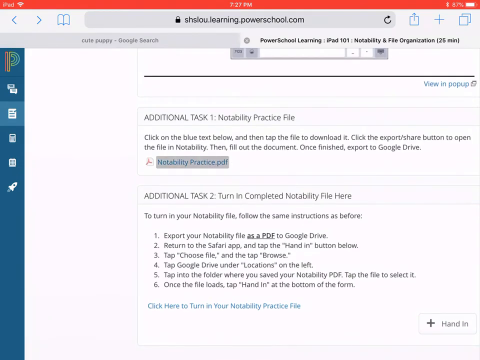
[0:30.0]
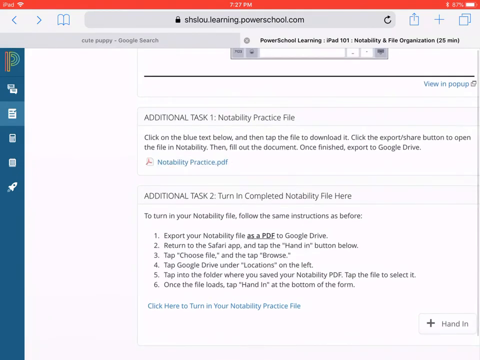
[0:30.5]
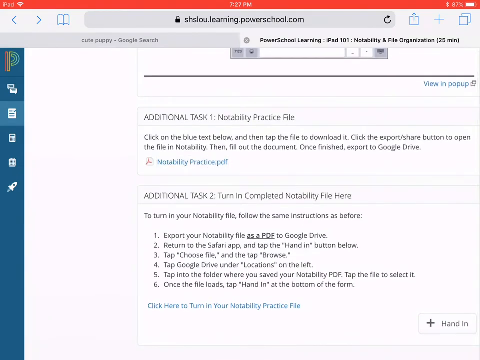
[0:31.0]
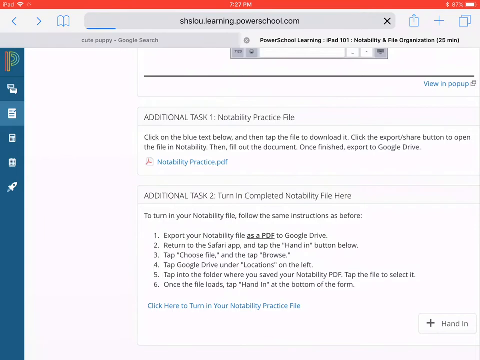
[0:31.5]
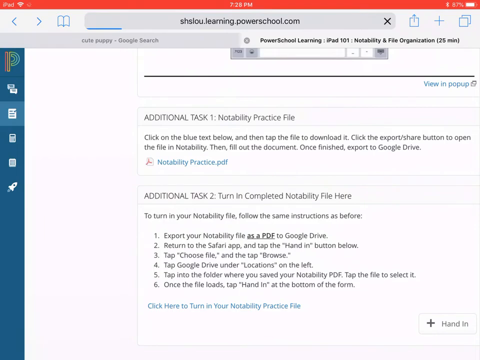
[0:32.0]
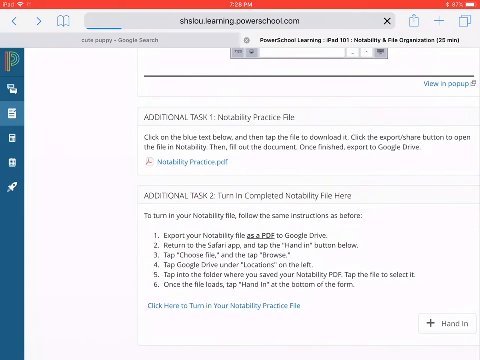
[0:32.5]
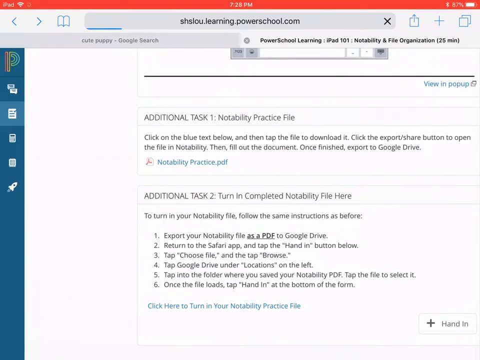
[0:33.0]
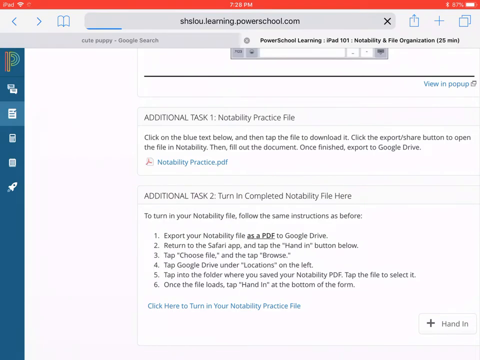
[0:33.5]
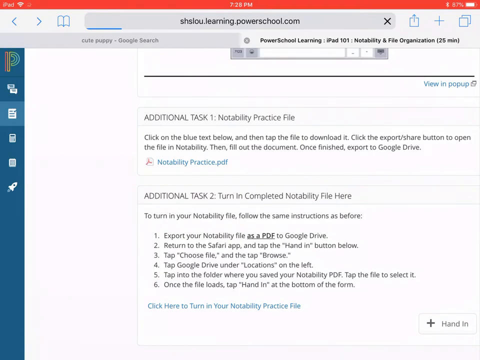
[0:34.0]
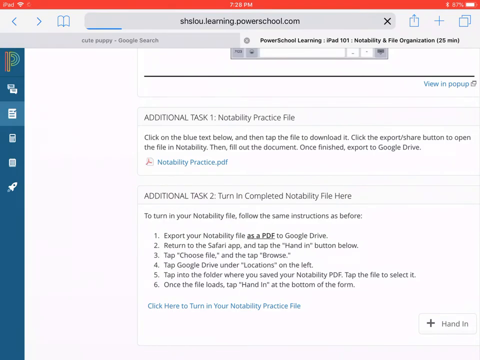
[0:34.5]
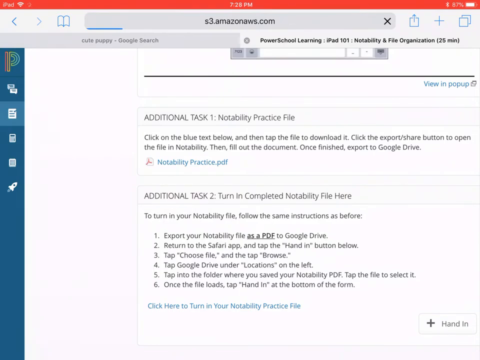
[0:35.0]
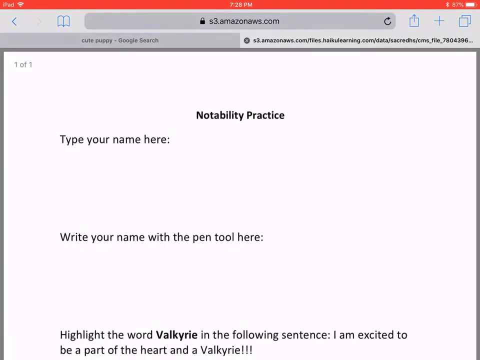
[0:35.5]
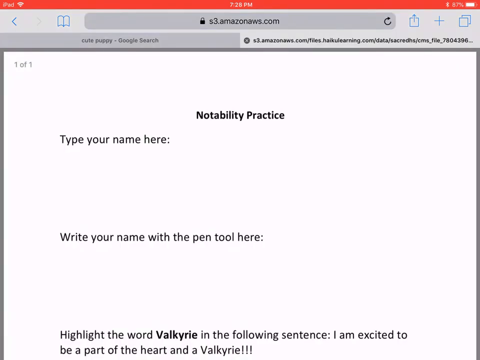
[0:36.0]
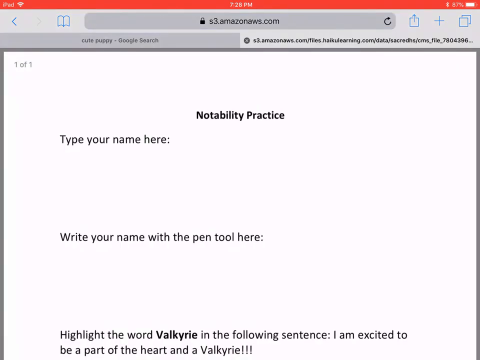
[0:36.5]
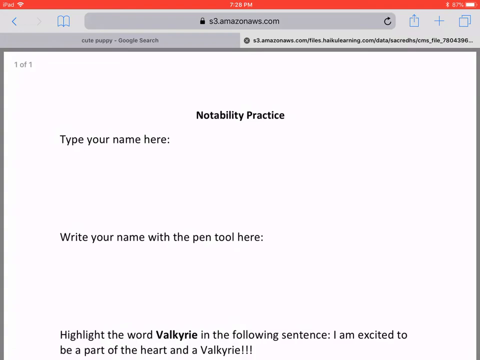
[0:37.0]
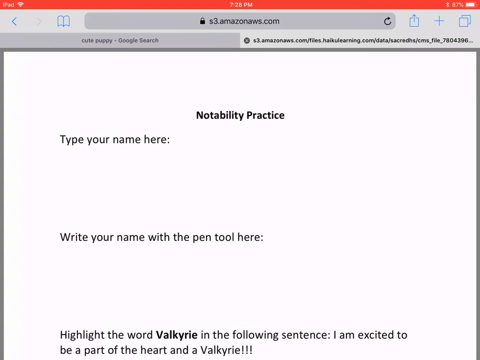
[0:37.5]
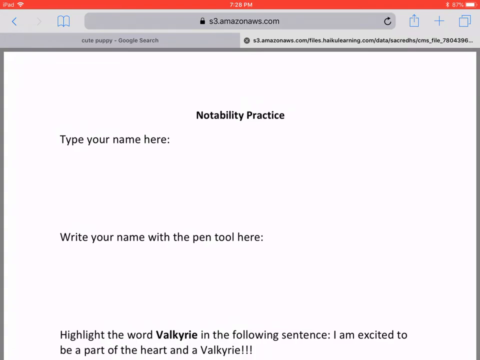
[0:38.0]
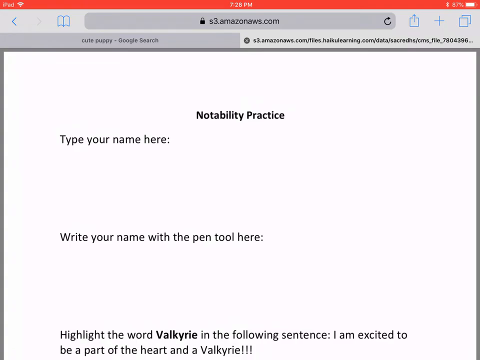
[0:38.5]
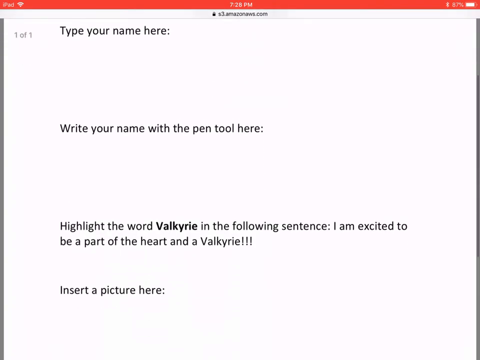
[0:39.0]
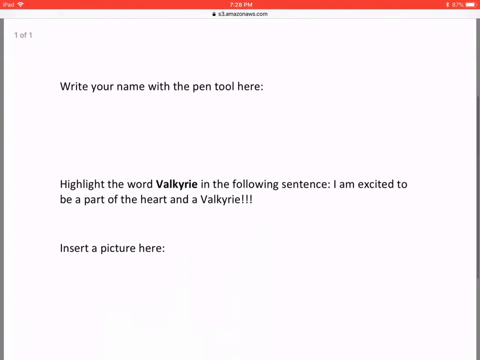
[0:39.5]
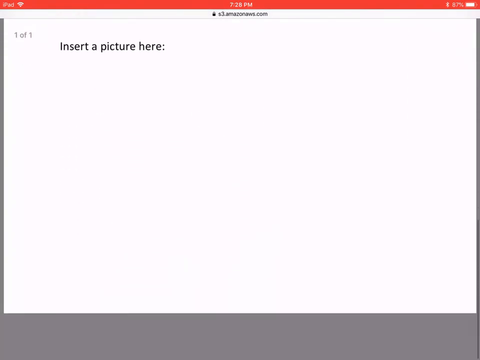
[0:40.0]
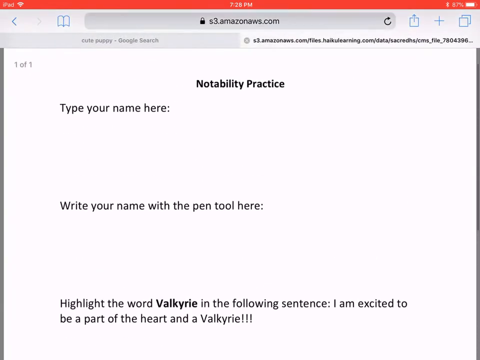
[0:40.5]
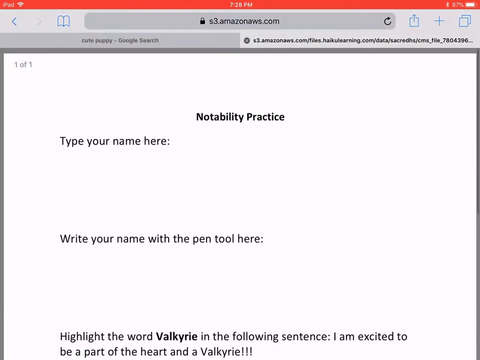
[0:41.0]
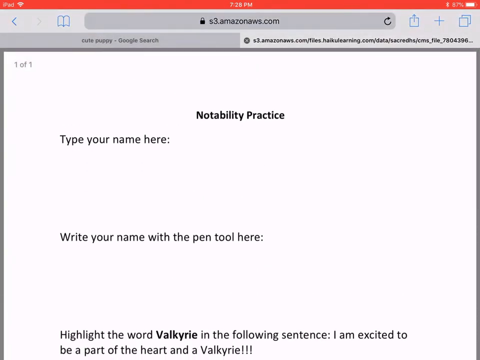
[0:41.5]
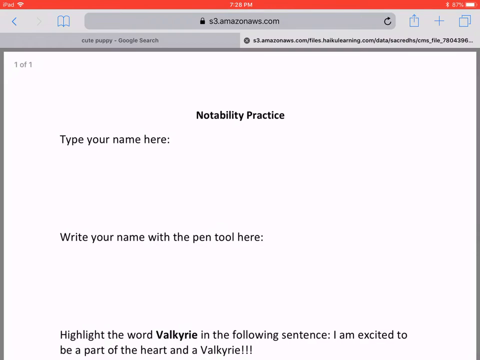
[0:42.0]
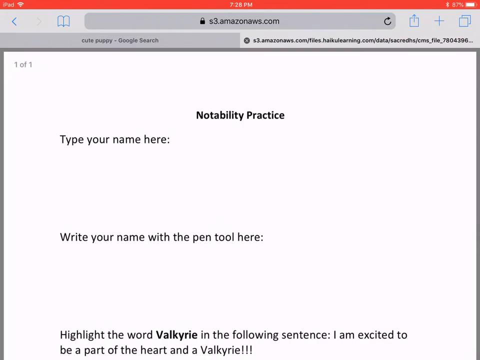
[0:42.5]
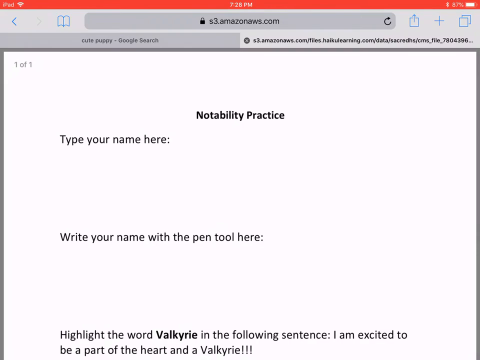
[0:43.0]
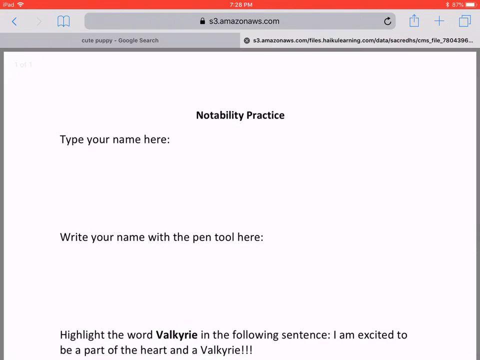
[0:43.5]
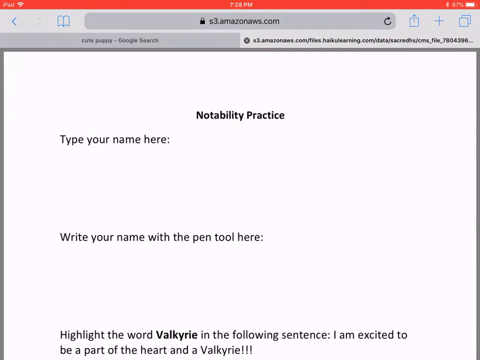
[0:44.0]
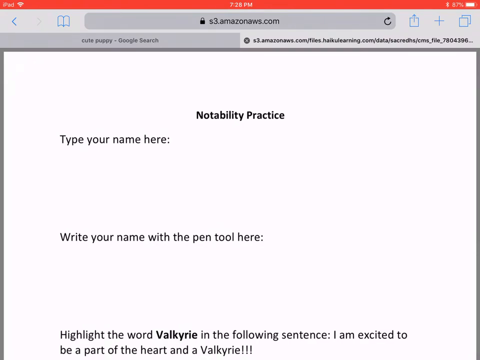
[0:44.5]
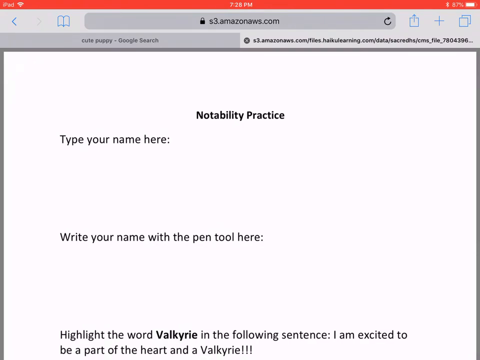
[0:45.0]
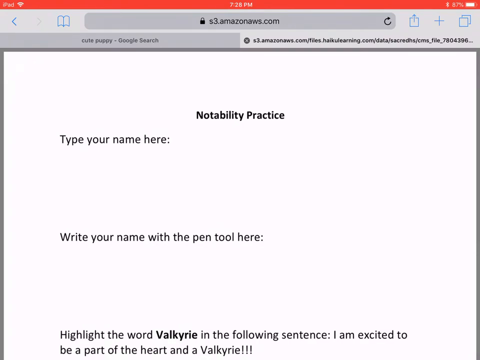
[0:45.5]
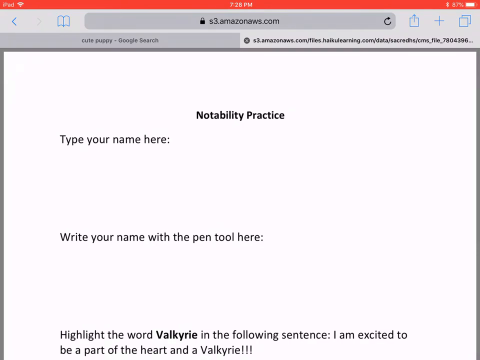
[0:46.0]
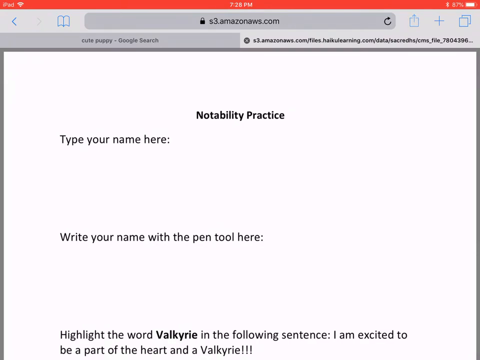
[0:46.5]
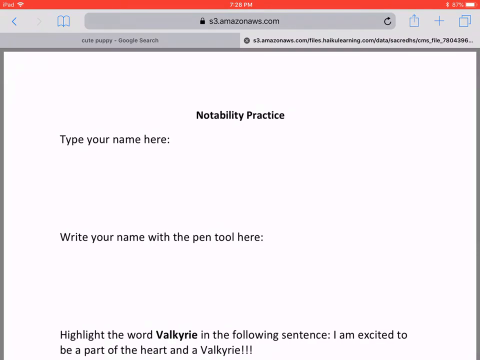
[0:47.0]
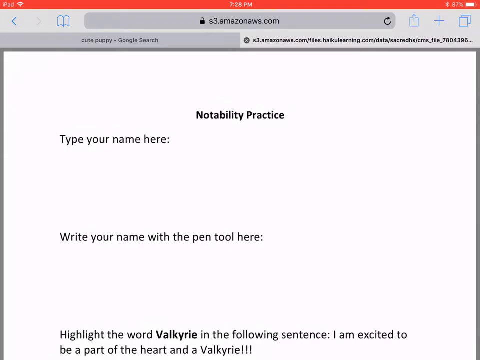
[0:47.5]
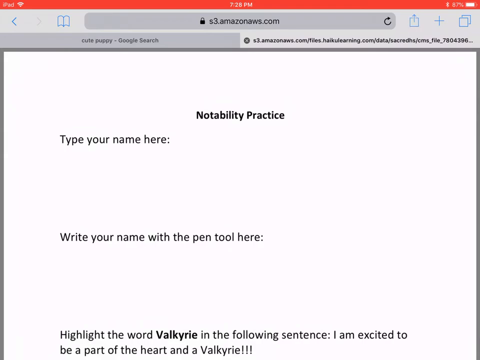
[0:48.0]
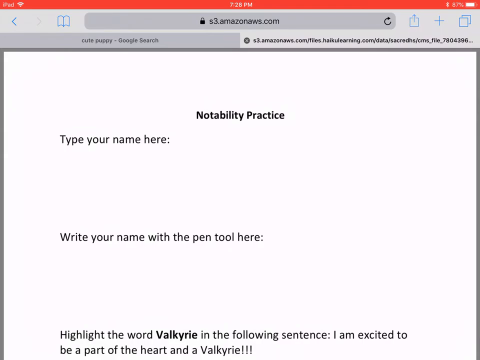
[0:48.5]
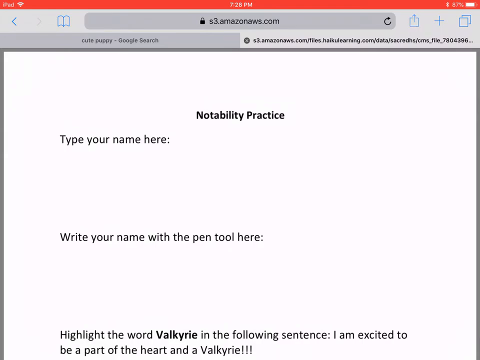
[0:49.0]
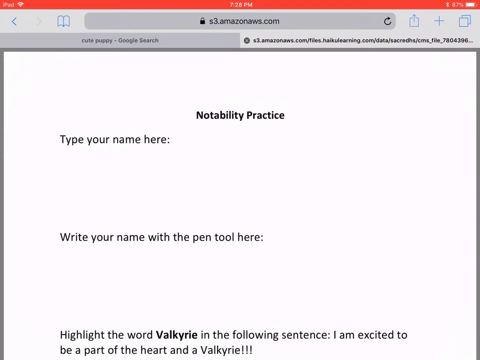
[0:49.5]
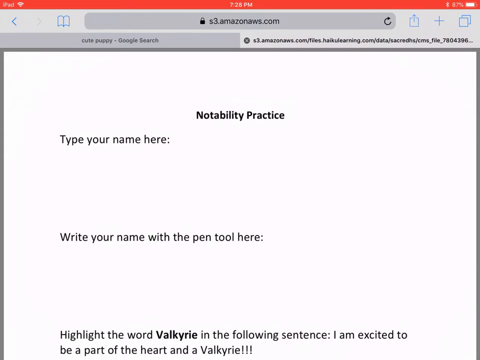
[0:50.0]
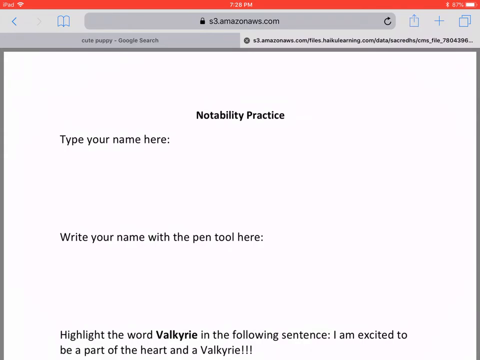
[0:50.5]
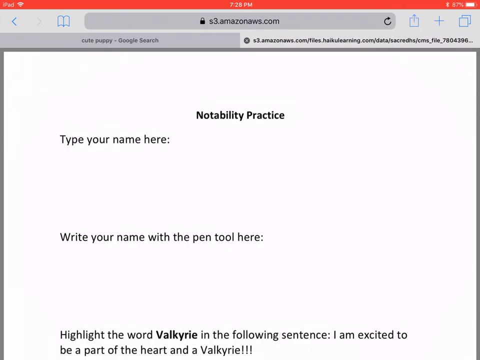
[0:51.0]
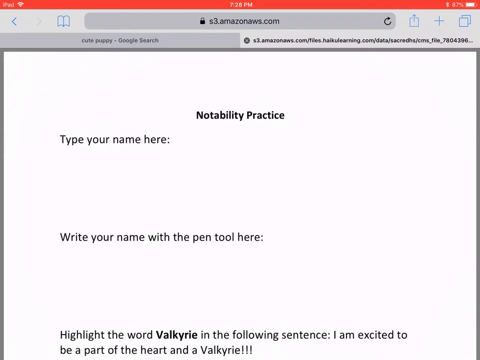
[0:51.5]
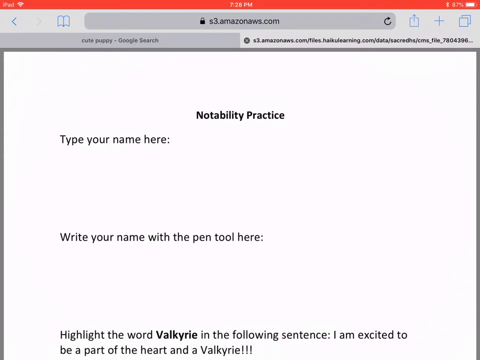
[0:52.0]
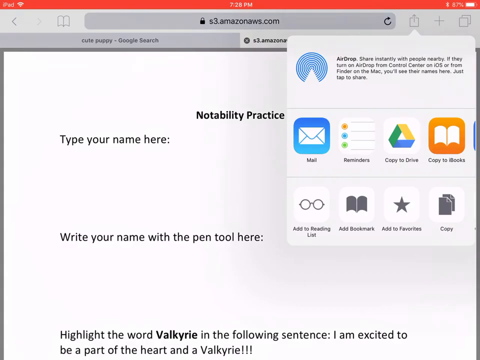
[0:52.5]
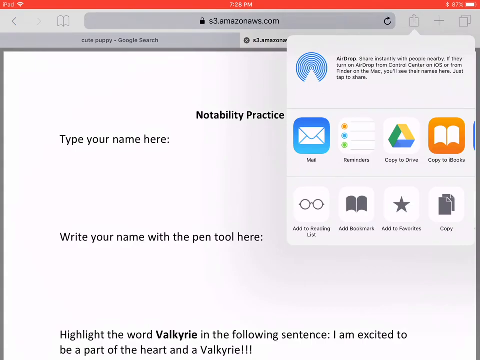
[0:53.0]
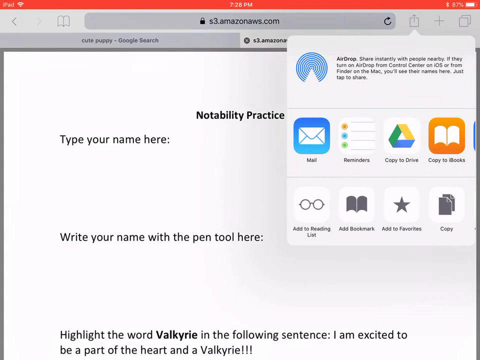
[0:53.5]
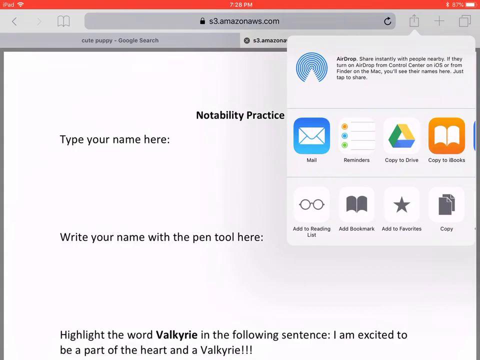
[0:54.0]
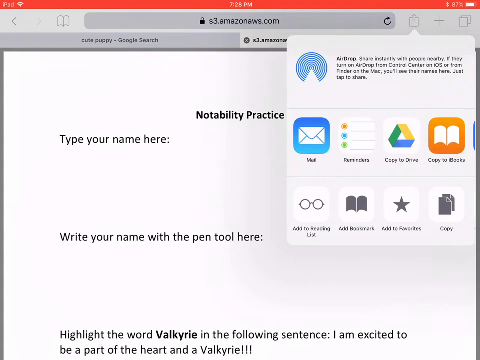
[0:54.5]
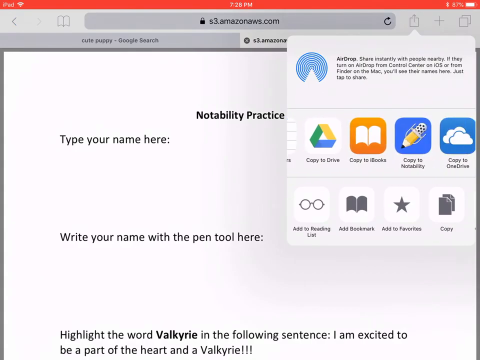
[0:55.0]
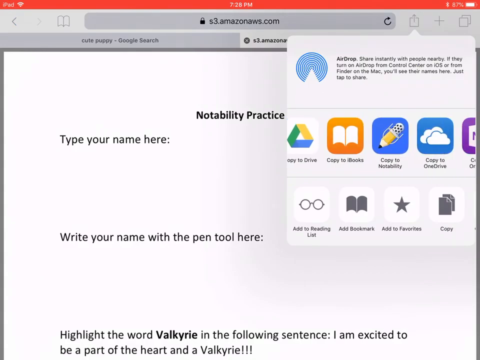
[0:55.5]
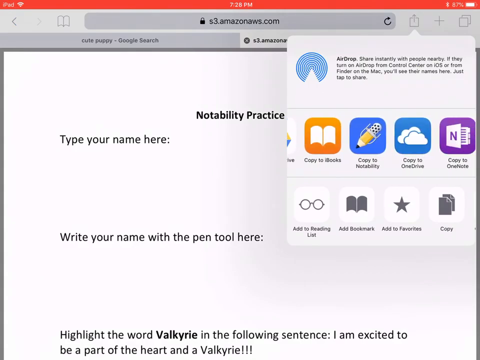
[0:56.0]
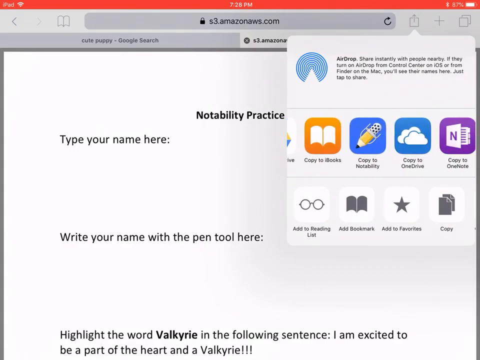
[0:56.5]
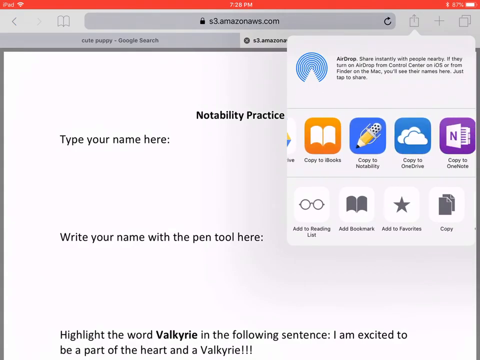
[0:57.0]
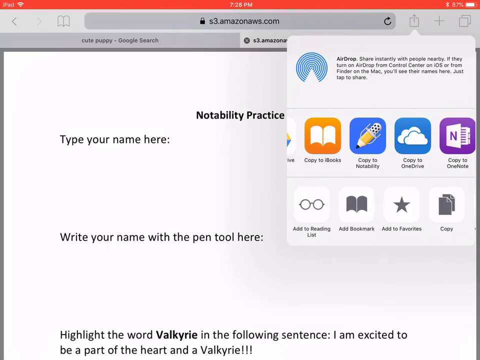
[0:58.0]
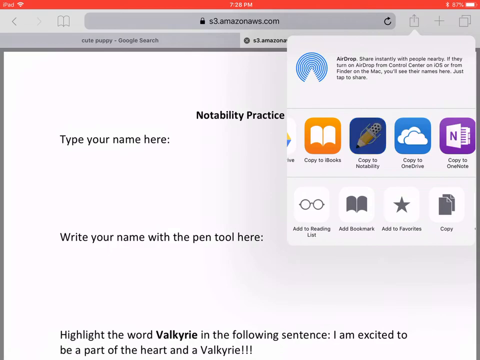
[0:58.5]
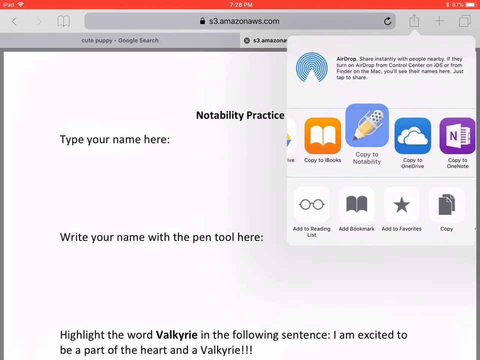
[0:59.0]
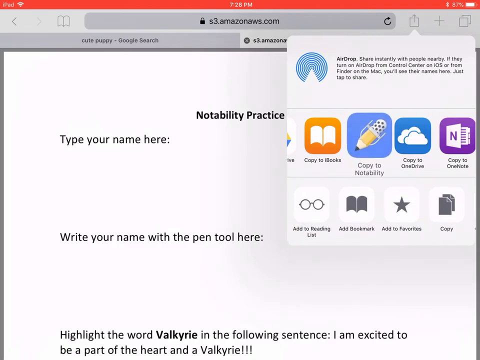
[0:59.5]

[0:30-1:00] The user clicks the attachment on additional task one, "NotabilityPractice.pdf", and the page appears to refresh as the attachment loads. The new page, one of one, is headed "NotabilityPractice". It has the prompt "type your name here:" with a space for the name, then "write your name with the pen tool here", also with a space. The view stays there, then quickly scrolls down to the bottom and back up. Further down, an unnumbered third item reads "highlight the word Valkyrie in the following sentence: I am excited to be a part of the heart and the Valkyrie!!!", and the final item is "insert a picture here" with a space at the bottom for a picture. After scrolling back up, the user clicks some sort of icon in the top right corner of the screen, and a menu appears with "share by AirDrop" at the top and other icons below: Reminders, Copy to Drive, Copy to Books, Copy to Notability, and options such as Add to Bookmarks, Favourites and Reading List.